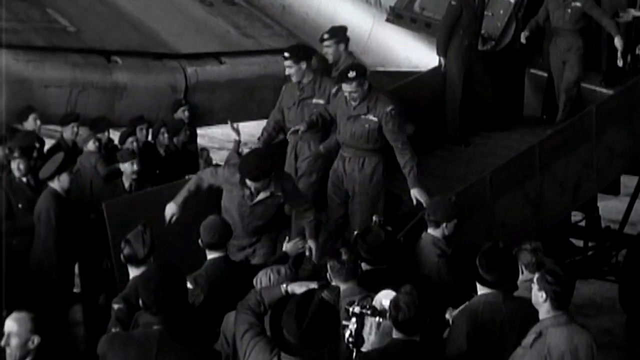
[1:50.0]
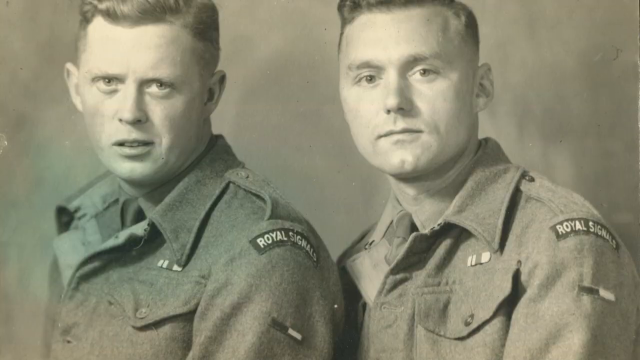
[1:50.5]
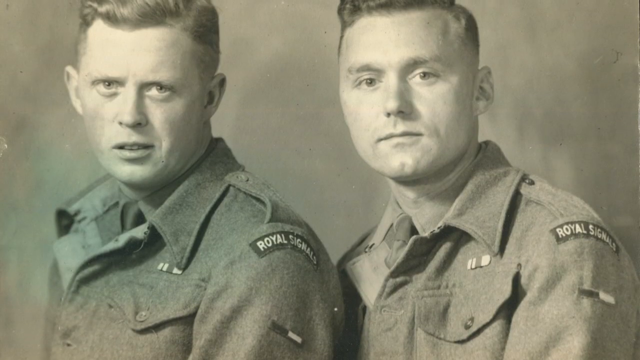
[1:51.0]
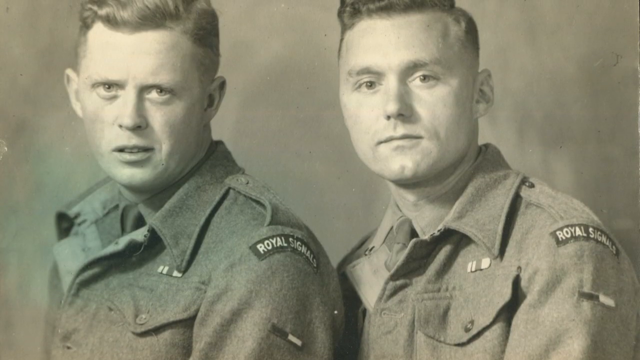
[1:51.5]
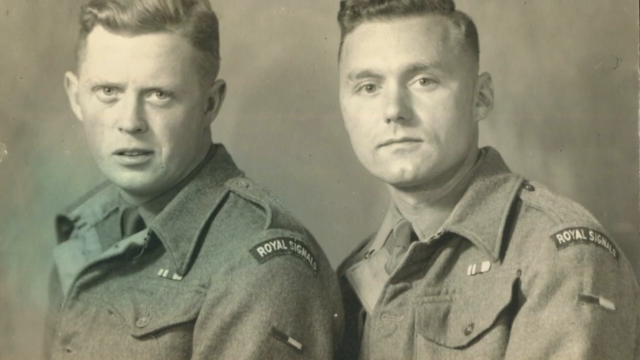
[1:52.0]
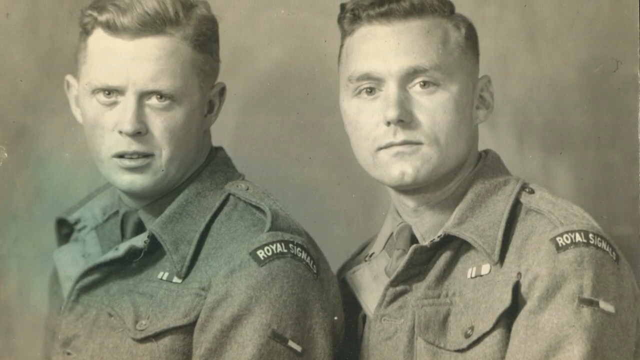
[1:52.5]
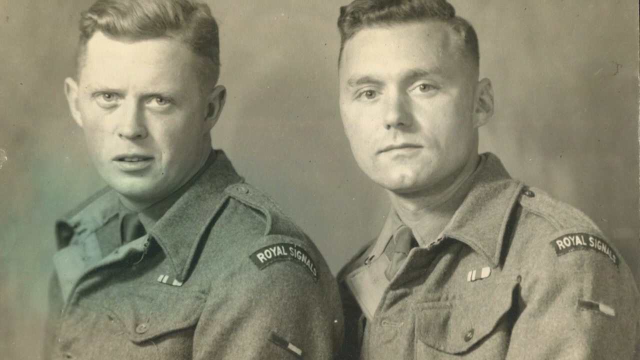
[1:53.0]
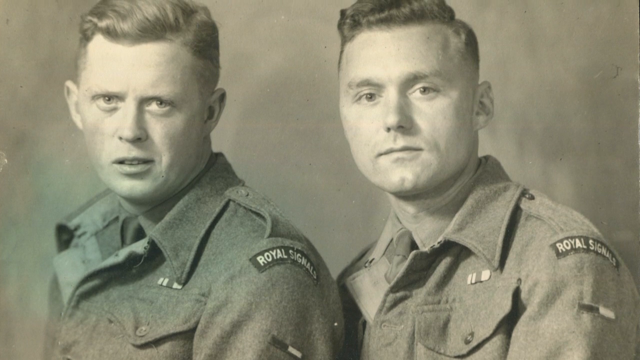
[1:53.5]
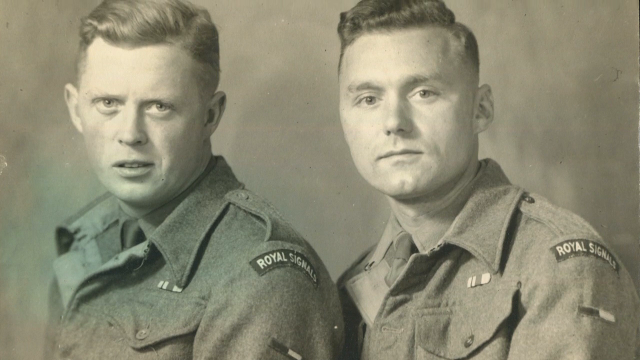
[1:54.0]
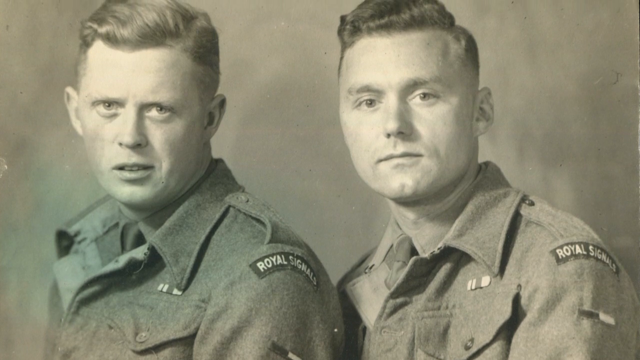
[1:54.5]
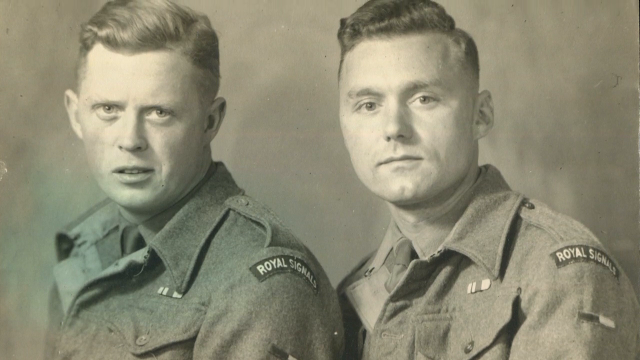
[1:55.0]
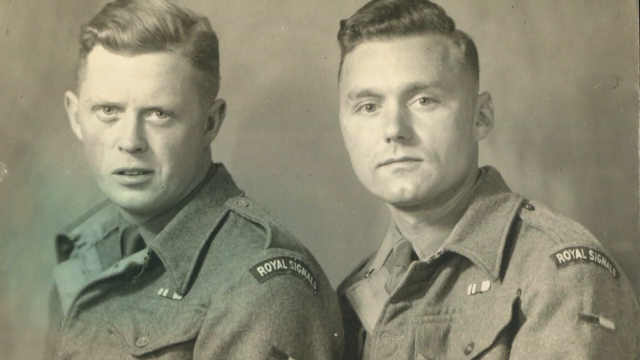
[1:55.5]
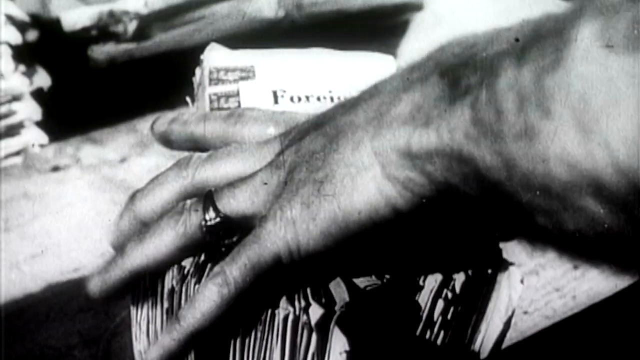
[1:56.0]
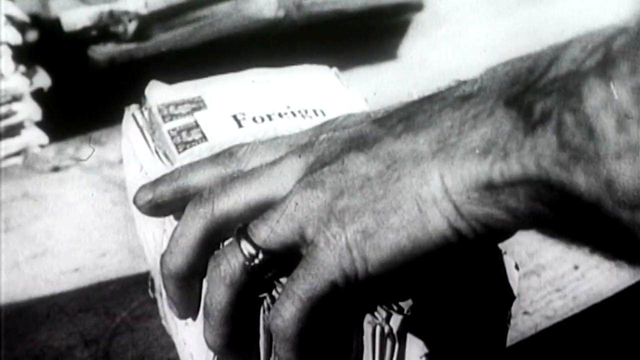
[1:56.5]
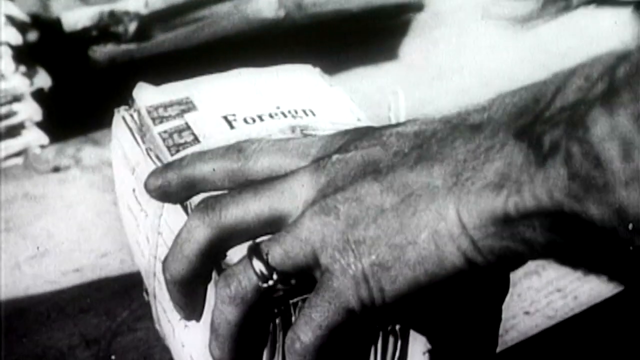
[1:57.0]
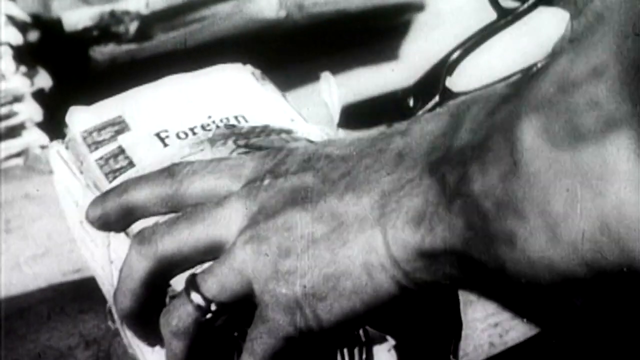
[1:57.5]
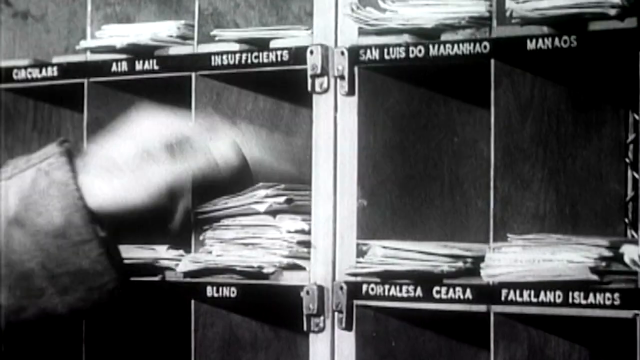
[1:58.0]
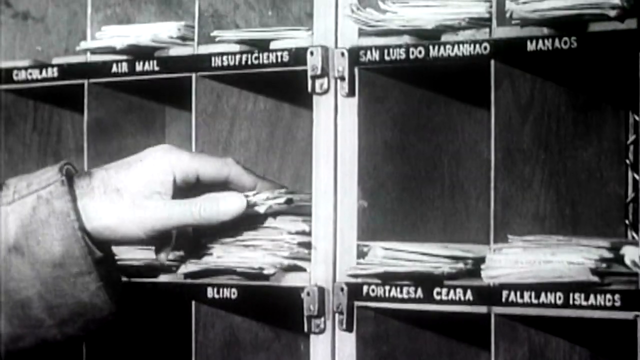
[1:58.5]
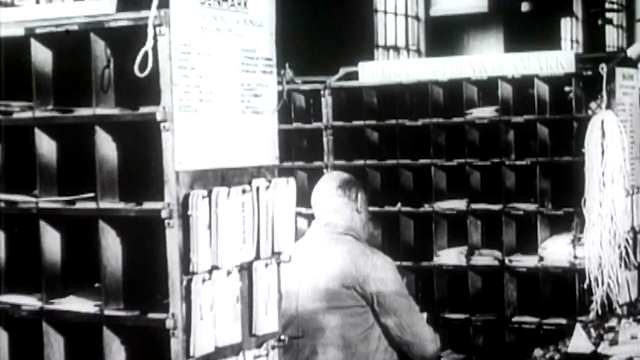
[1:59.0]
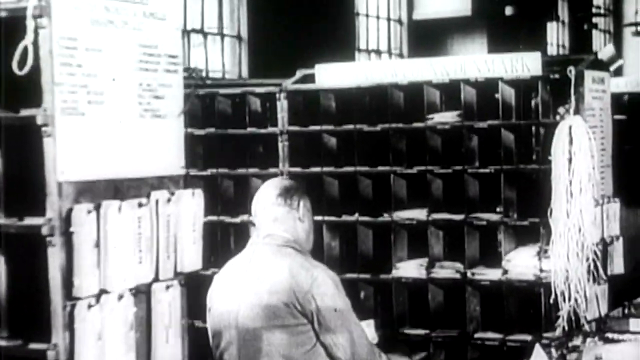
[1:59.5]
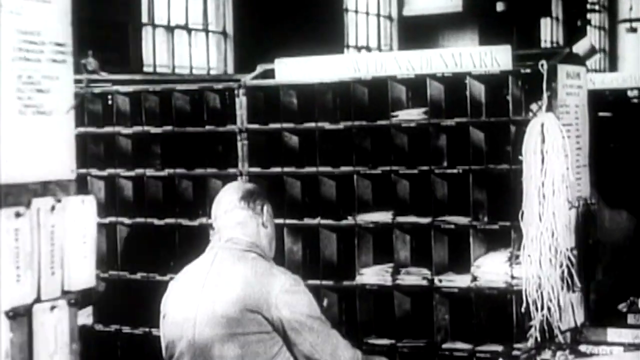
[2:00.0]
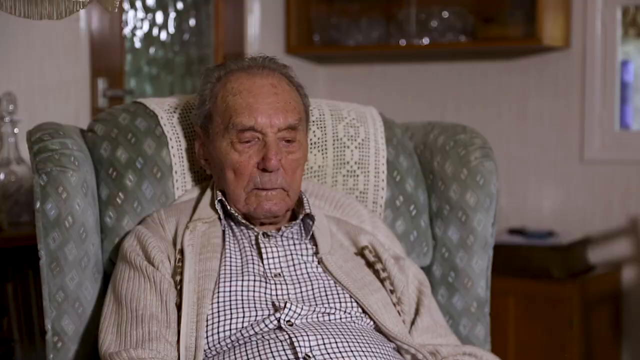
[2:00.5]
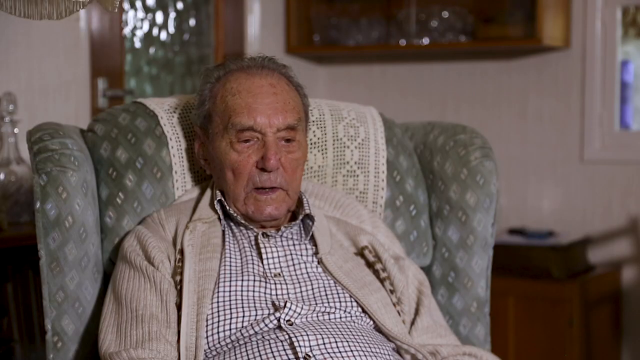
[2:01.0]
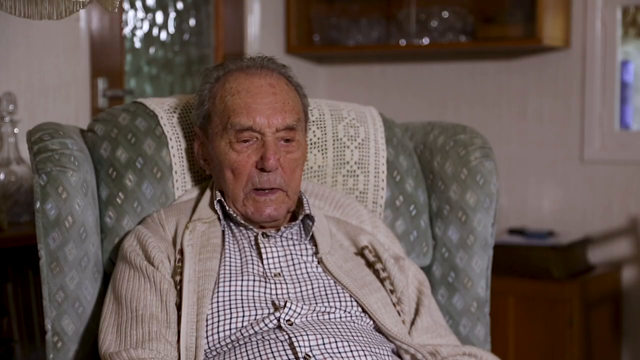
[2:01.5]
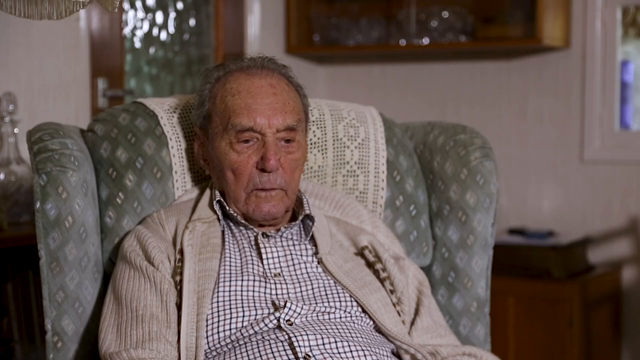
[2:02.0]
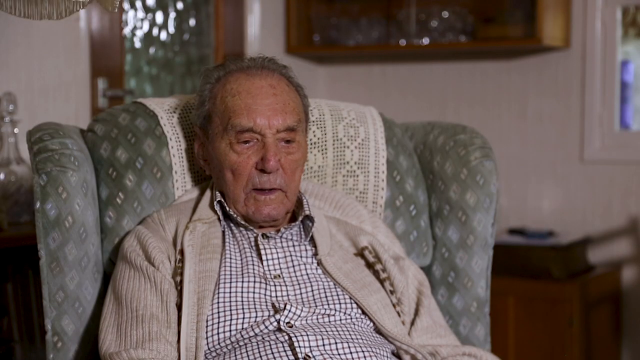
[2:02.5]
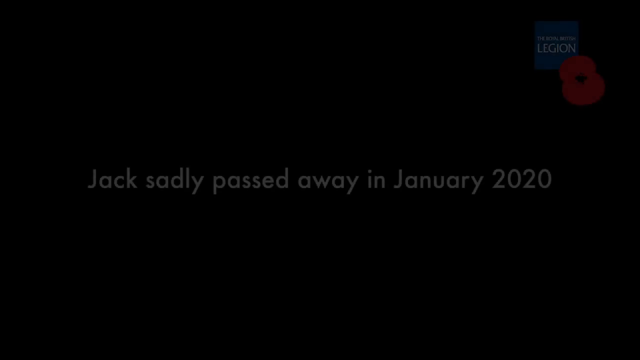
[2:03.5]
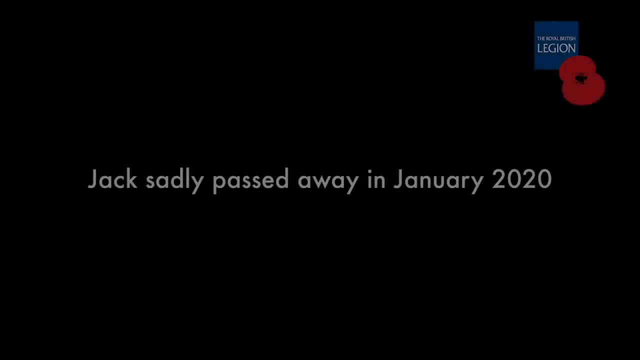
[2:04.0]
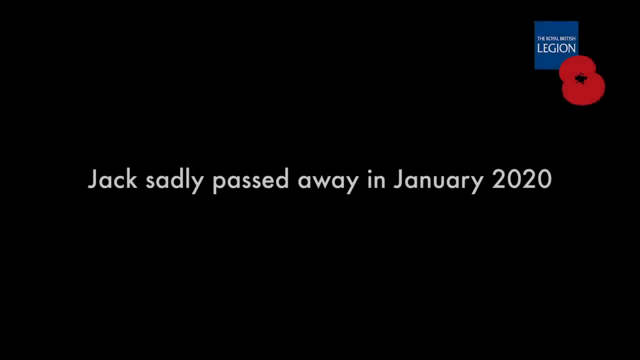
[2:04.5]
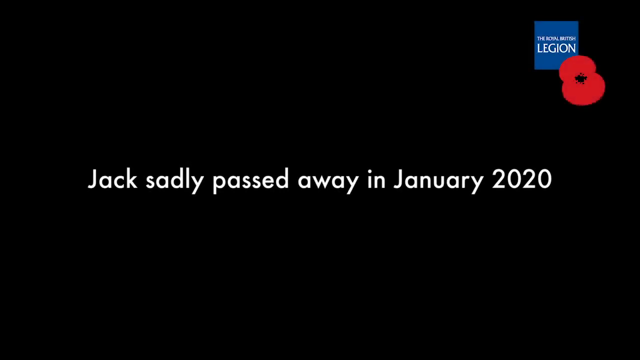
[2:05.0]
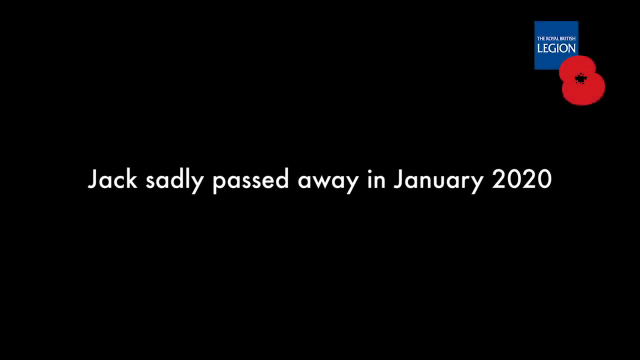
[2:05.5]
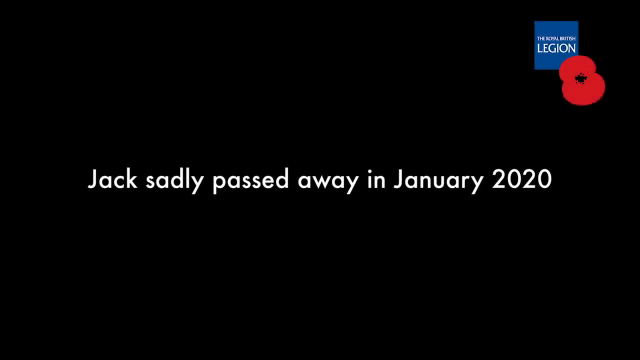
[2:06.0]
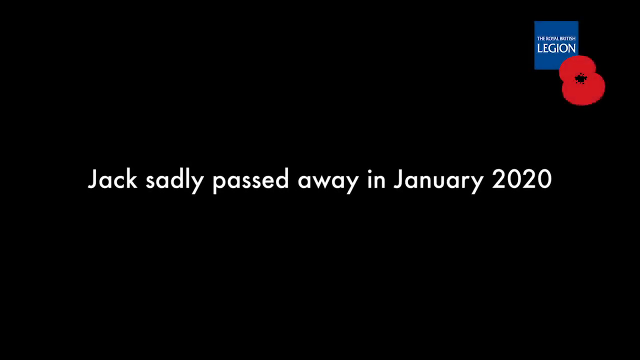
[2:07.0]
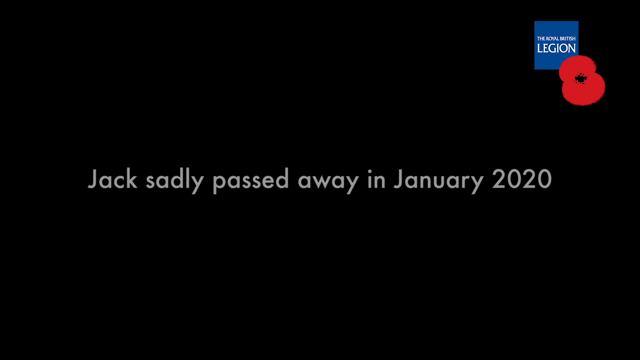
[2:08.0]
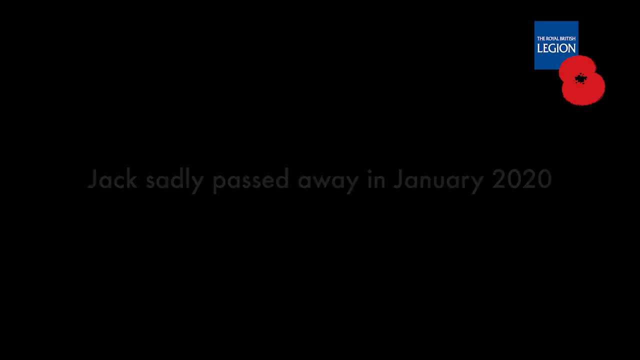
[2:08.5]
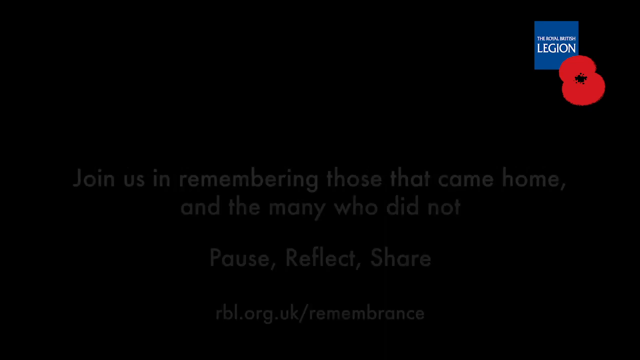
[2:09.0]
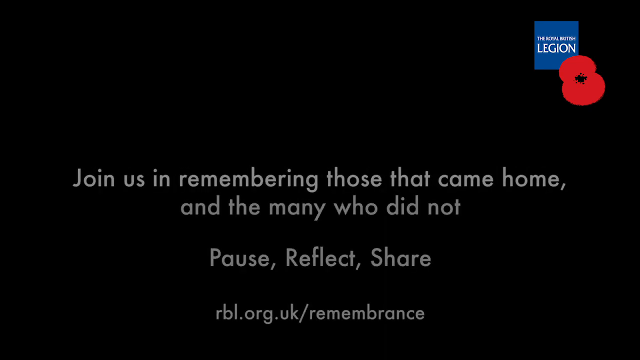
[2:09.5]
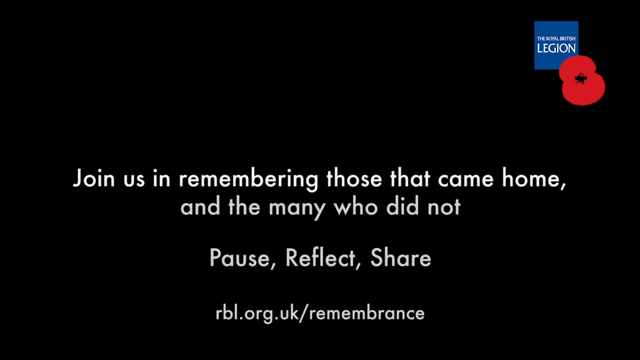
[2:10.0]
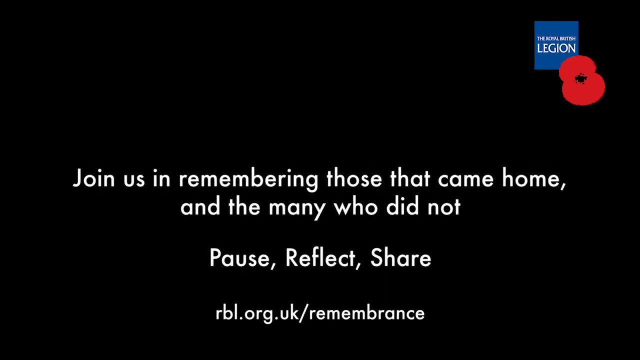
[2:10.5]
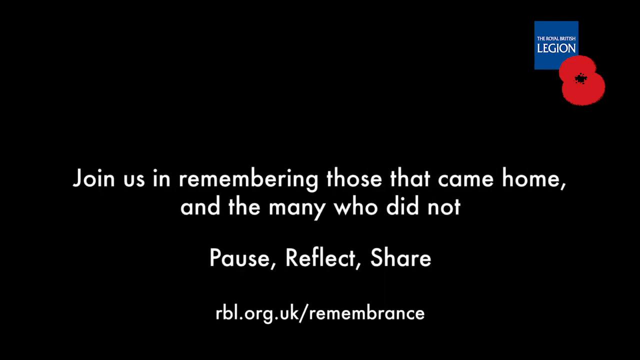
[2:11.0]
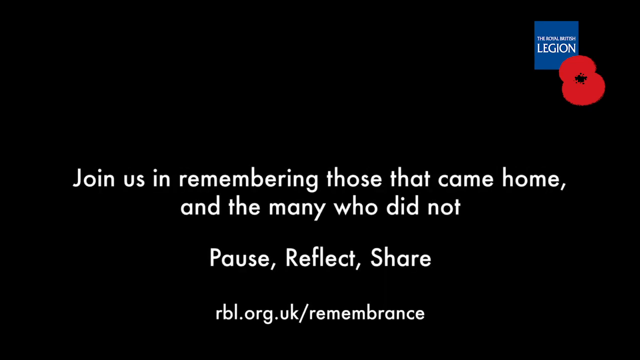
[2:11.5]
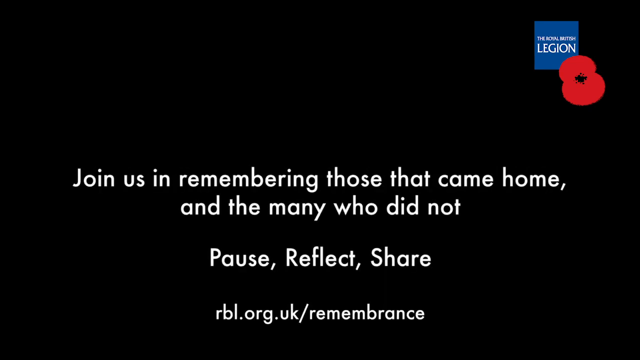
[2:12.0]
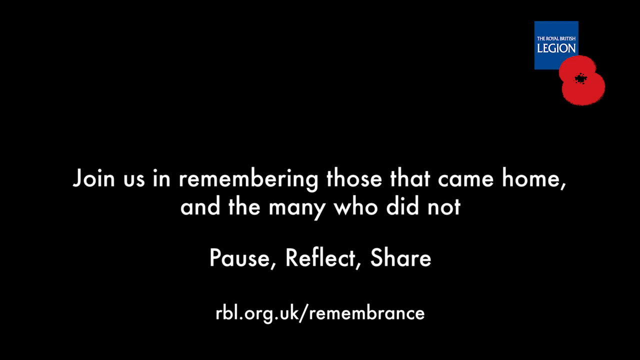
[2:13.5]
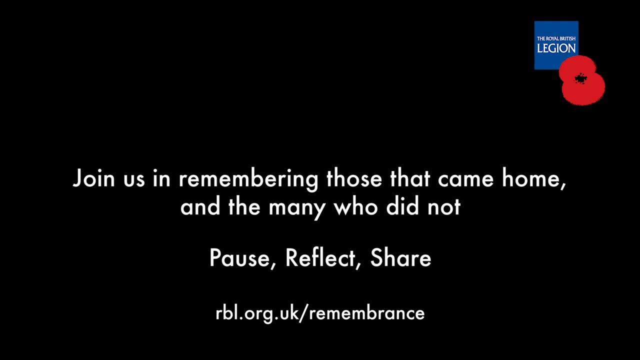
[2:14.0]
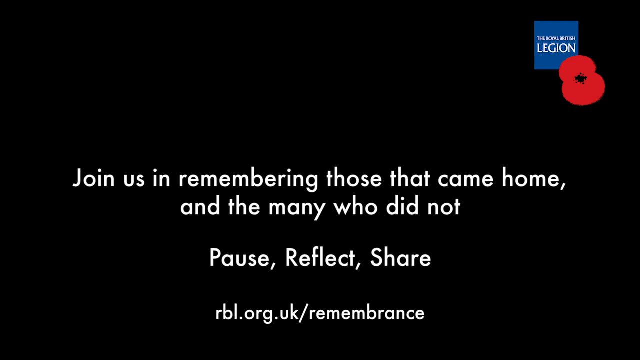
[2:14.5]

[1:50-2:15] In black and white, soldiers stand in a room, and some of them descend a staircase; they all appear happy, smiling and joyous. A black-and-white photo shows two Caucasian soldiers from the Royal Signals in uniform. The man on the left has his hair carefully combed back and is frowning a bit with his lips open; the man on the right has his lips closed and also has his hair combed back. A Caucasian hand with a ring on the fourth finger sorts documents into cubbyholes, and the camera shows a larger view of the room, which looks to be some sort of office. The video returns to an elderly man sitting in an armchair speaking to the camera. Text then reads "Jack sadly passed away in January 2020." followed by "Join us in remembering those that came home and the many who did not. Pause, reflect, and share."